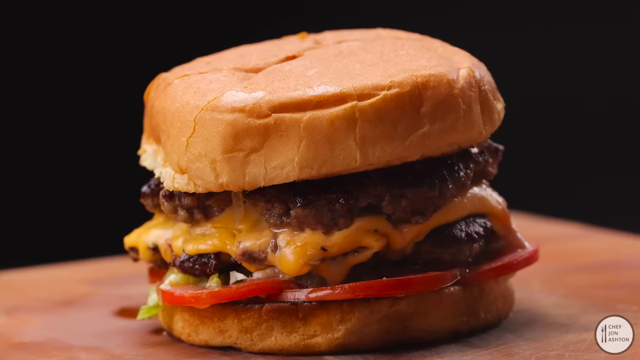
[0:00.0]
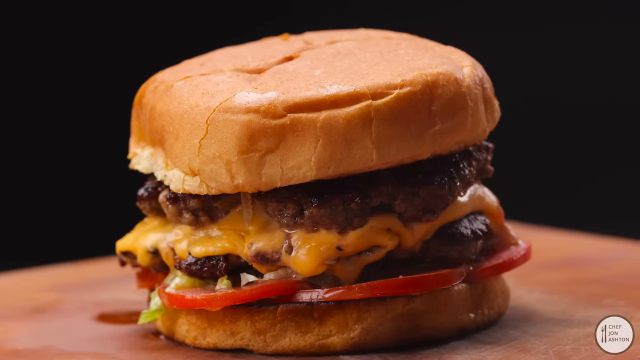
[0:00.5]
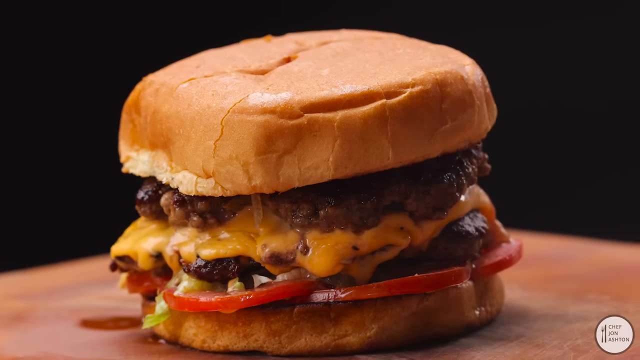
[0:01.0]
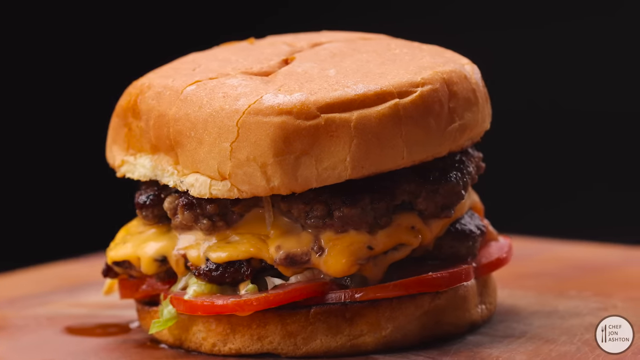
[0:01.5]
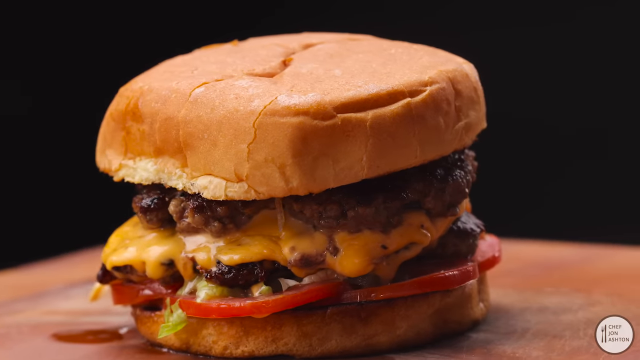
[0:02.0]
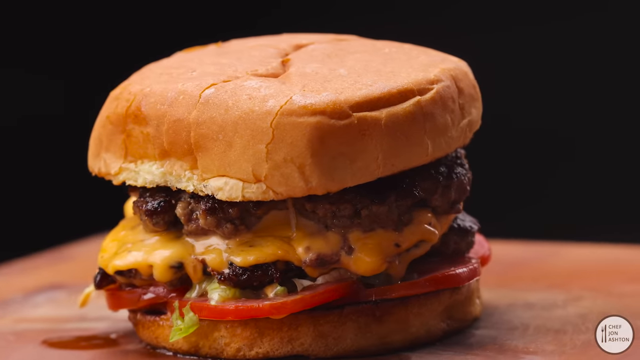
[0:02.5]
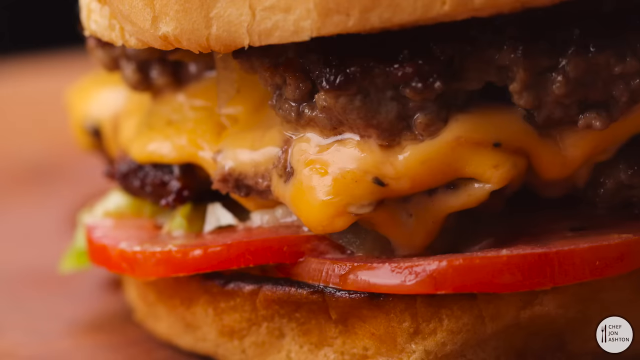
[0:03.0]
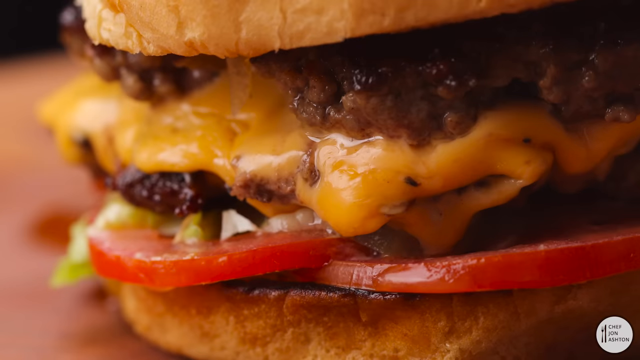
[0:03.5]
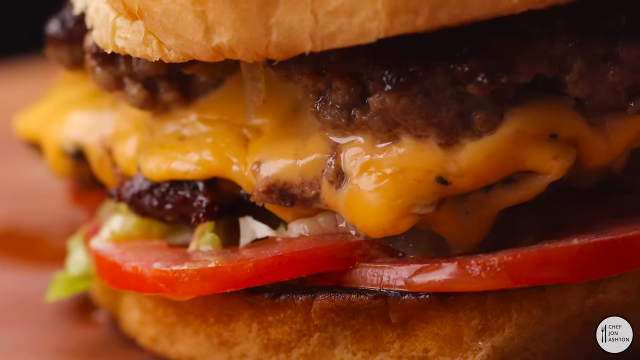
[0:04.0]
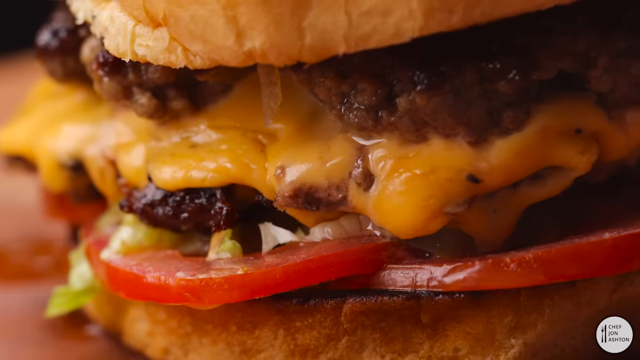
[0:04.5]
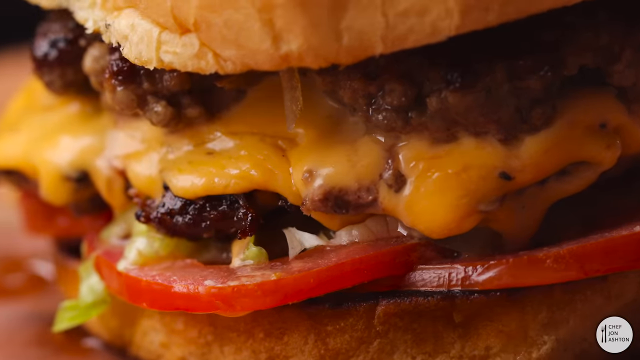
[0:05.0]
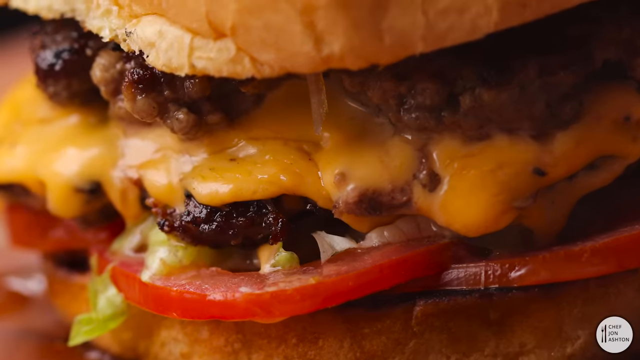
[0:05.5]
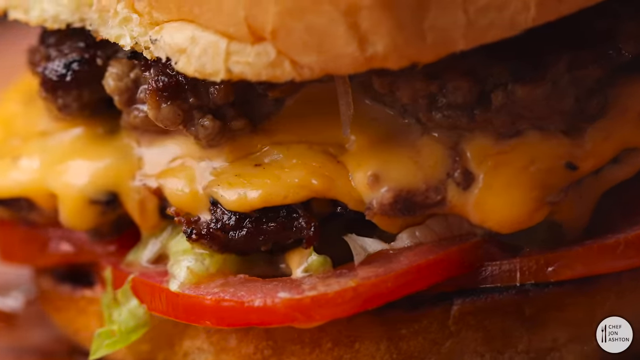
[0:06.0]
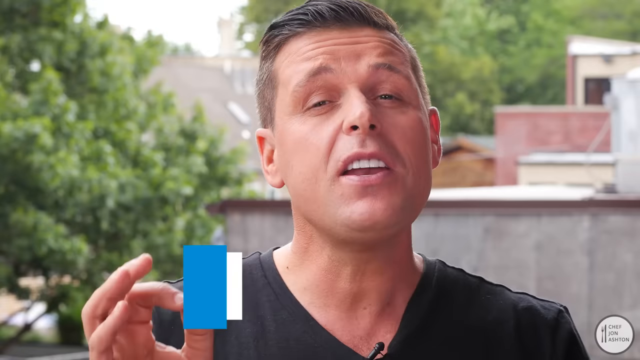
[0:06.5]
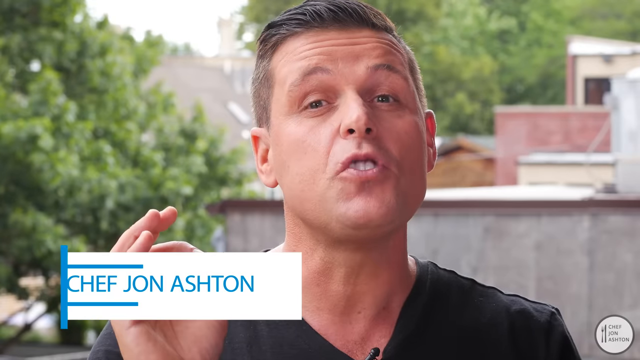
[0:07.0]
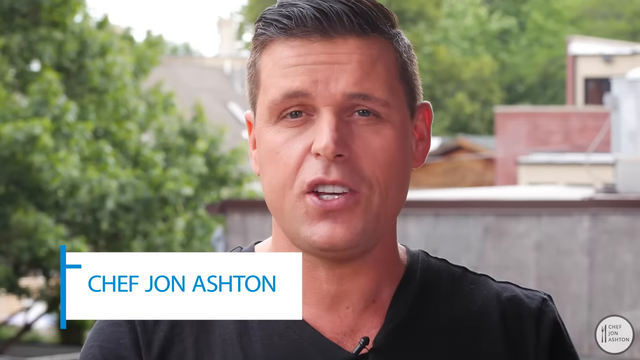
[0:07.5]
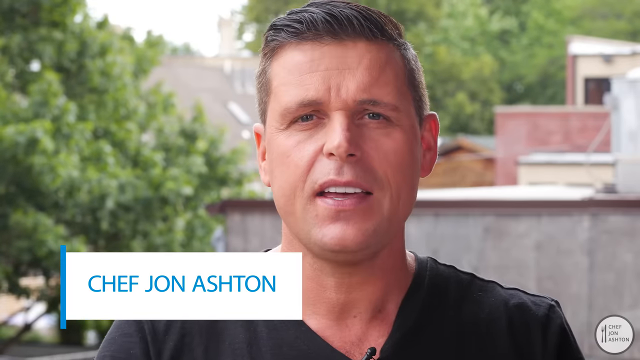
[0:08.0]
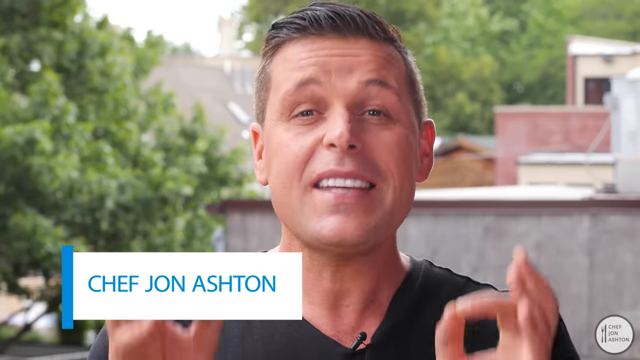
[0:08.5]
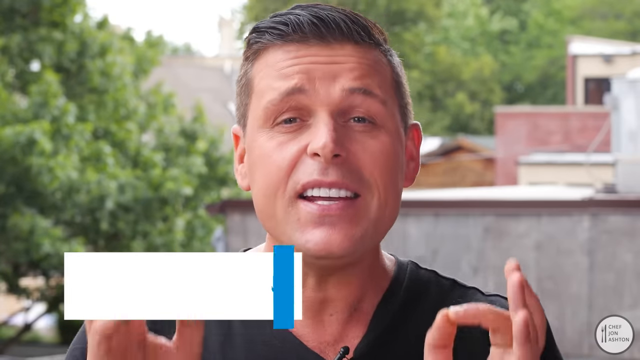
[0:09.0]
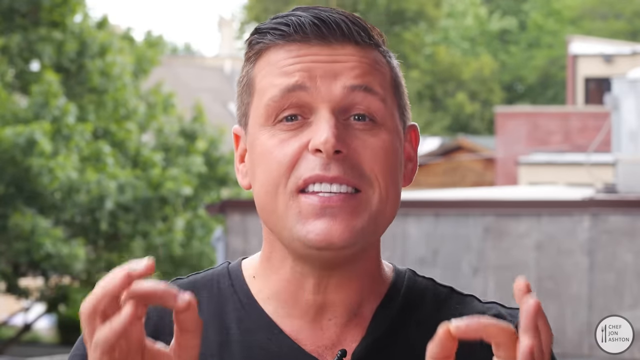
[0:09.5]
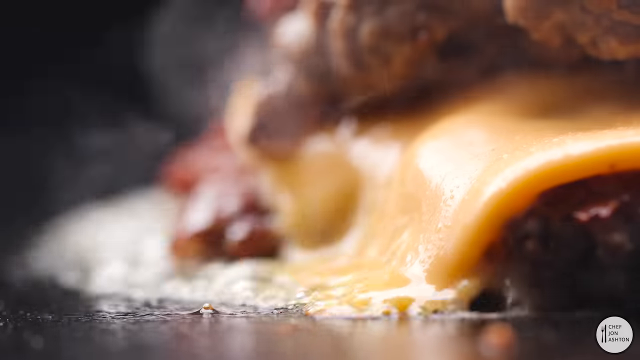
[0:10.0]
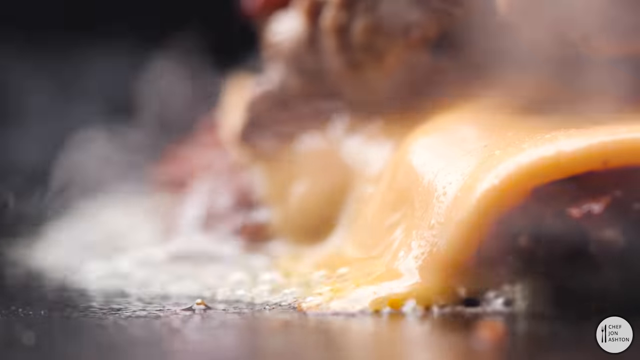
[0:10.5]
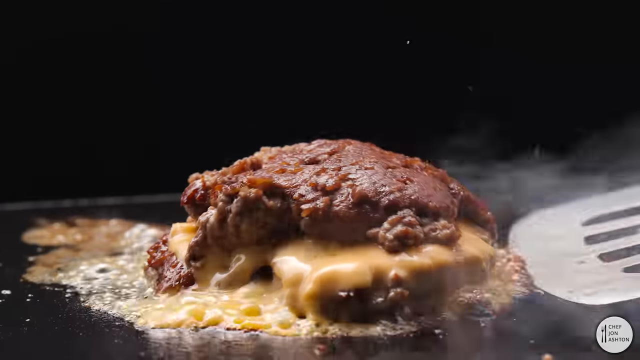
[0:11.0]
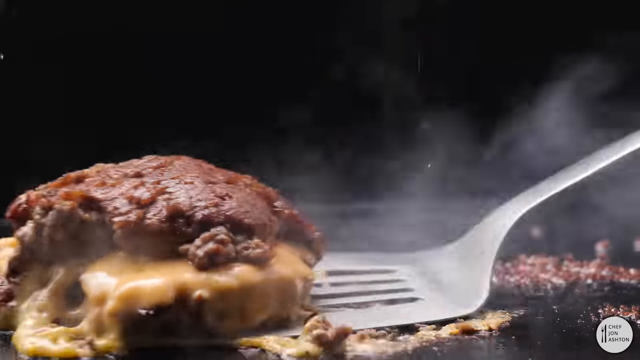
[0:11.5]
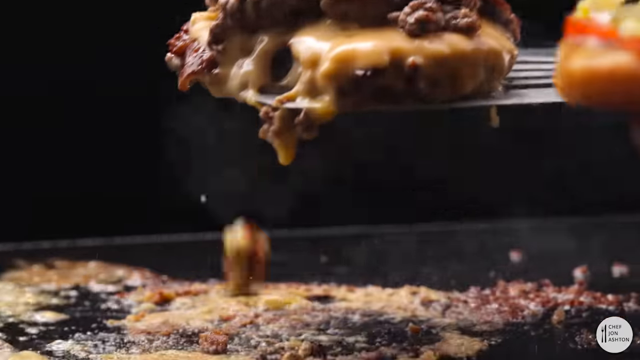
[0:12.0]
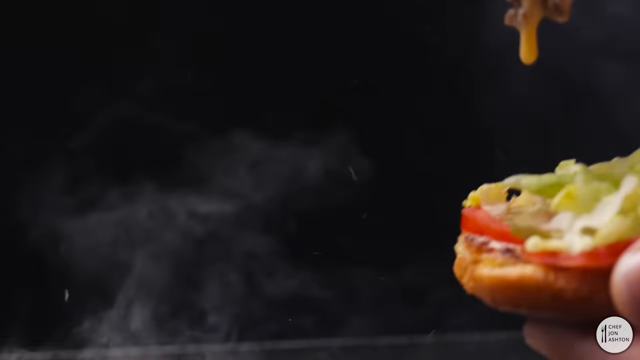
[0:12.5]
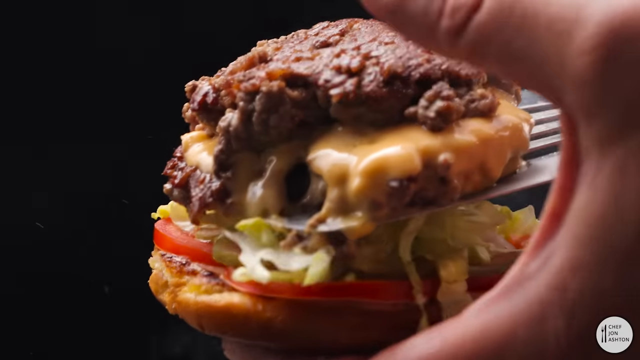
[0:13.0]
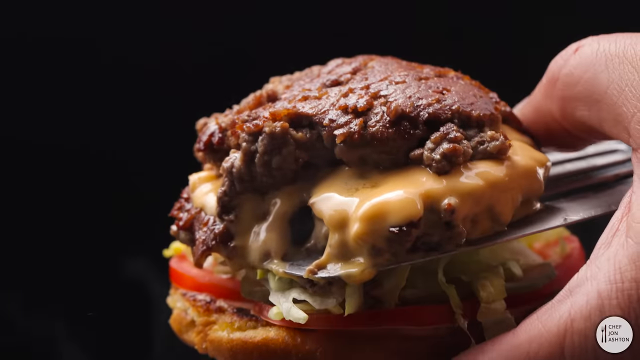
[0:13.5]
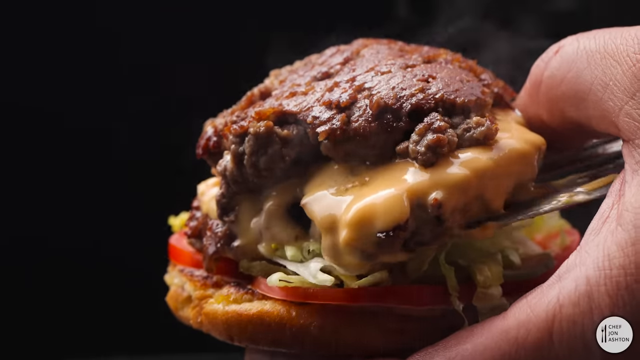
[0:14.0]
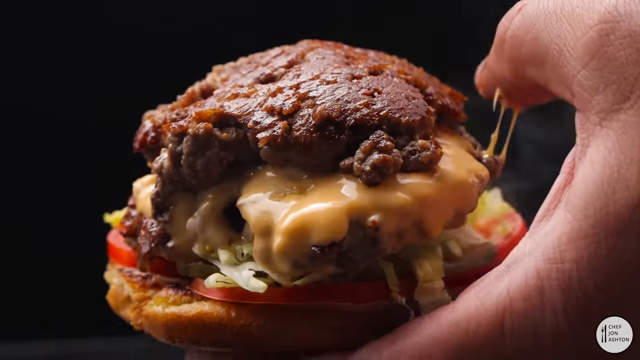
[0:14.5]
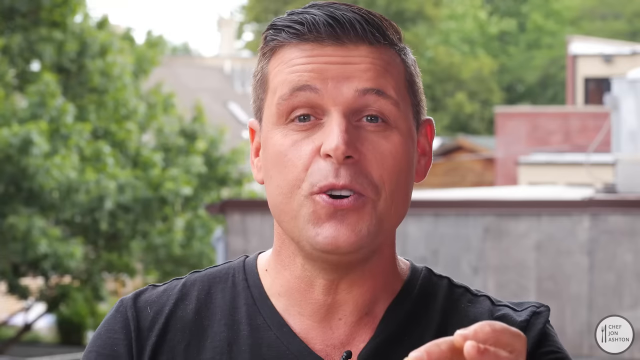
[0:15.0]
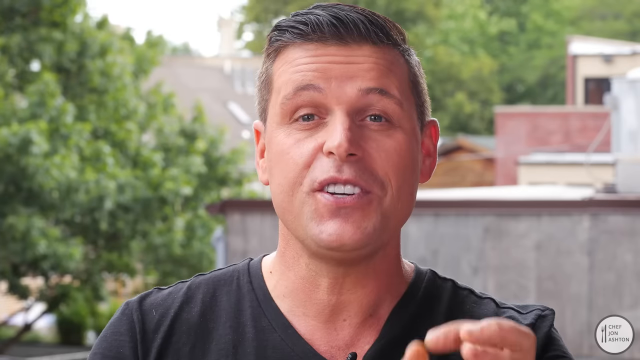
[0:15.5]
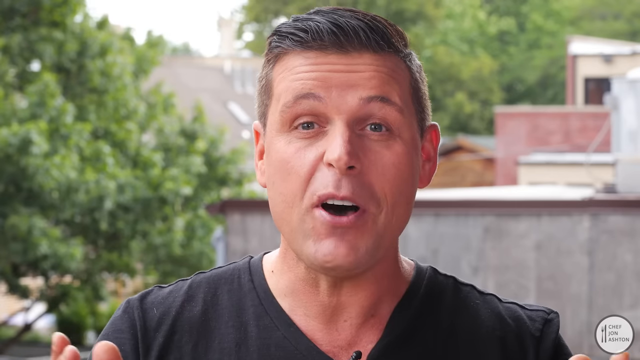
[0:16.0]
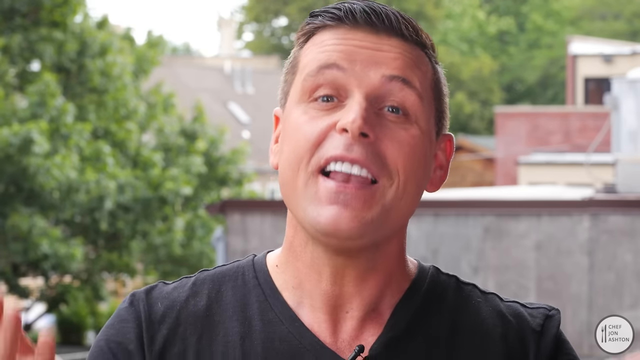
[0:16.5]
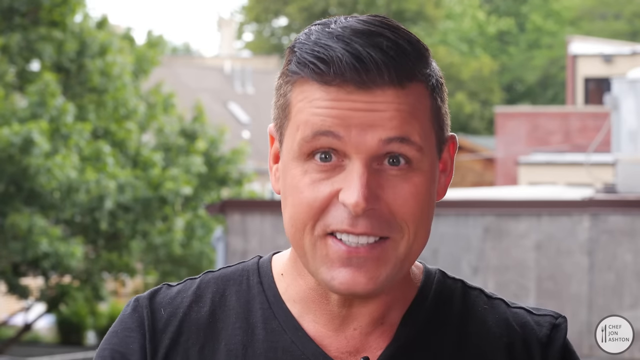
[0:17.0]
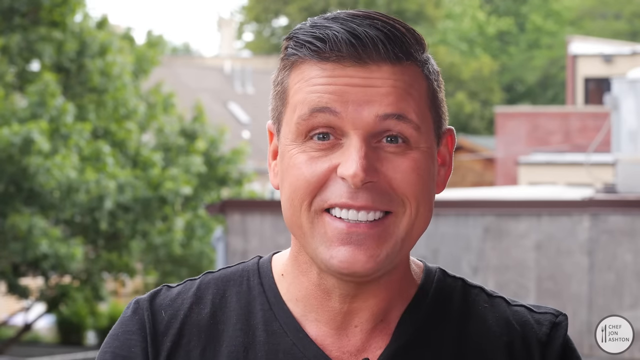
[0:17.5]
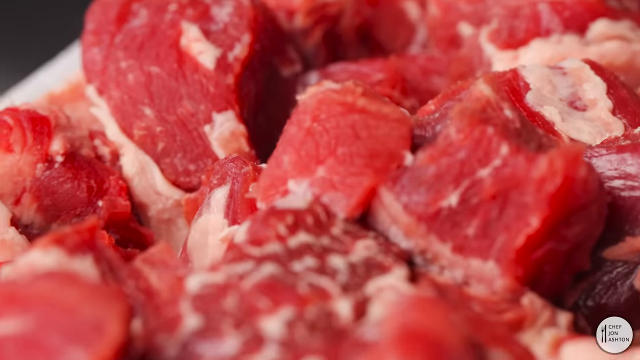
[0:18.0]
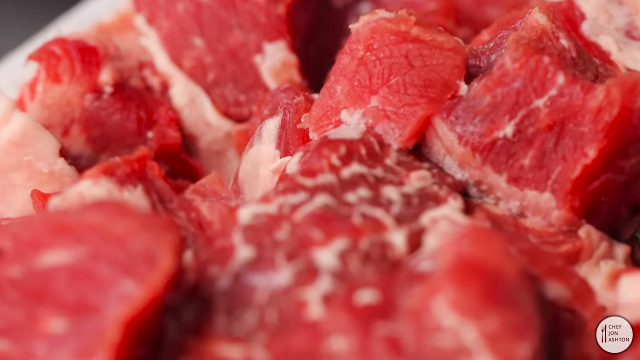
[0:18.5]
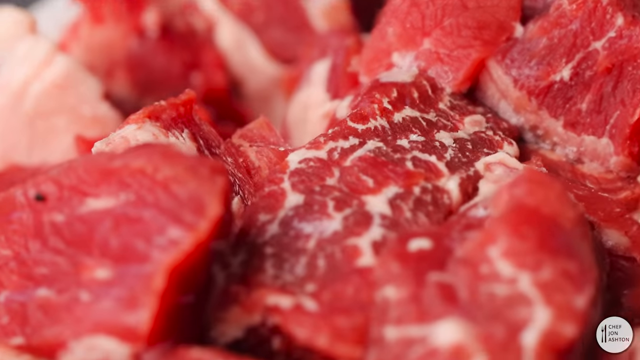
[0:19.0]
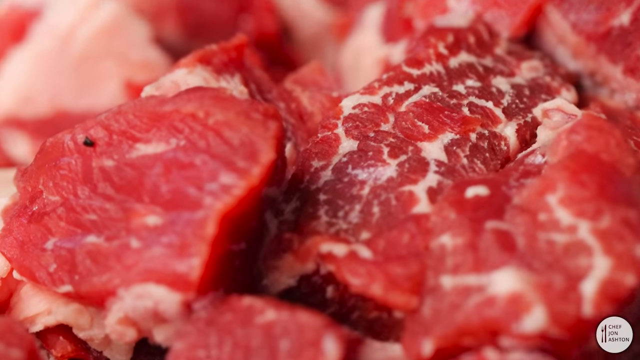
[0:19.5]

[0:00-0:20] A double cheeseburger is on top of what looks like a wooden table or board. It has two slices of meat with one visible slice of cheese between them, plus tomato and lettuce, all on a hamburger bun. The hamburger rotates counterclockwise along with the table it is on. The video then cuts to live action of an adult man with very short hair that is hard to tell as dark brown or dishwater blonde; it looks like a blend of blonde and brown. In the bottom left corner, blue text inside a white rectangle reads "Chef JON Ashton." Trees, some houses and buildings are visible behind him. The man talks to the camera, or to the audience through the camera. Next, a cheeseburger is shown in the process of being made, sitting on a grill and sizzling: two pieces of meat with a melted piece of cheese between them. Someone with a spatula picks the burger up and sets it on a bun that has lettuce and tomato on it.